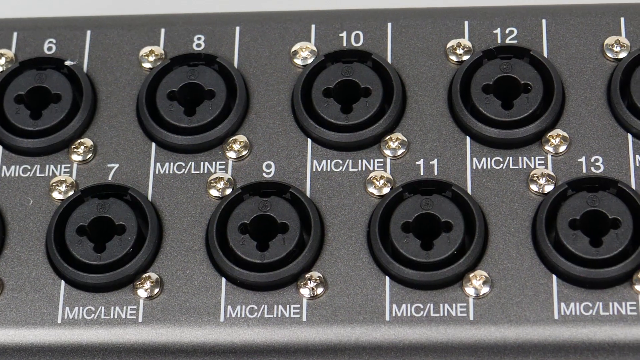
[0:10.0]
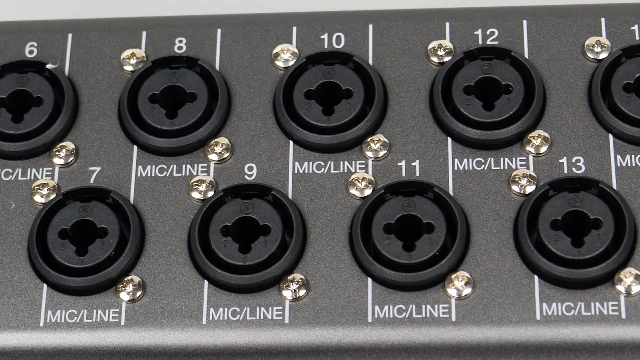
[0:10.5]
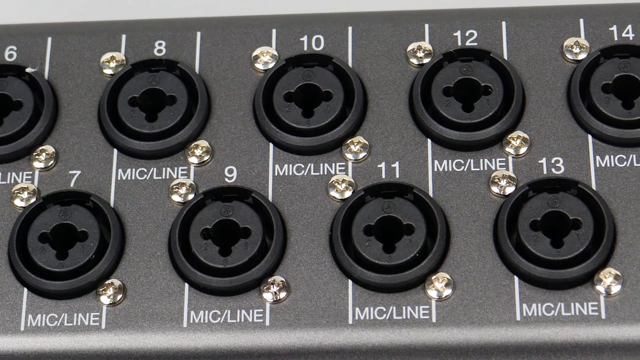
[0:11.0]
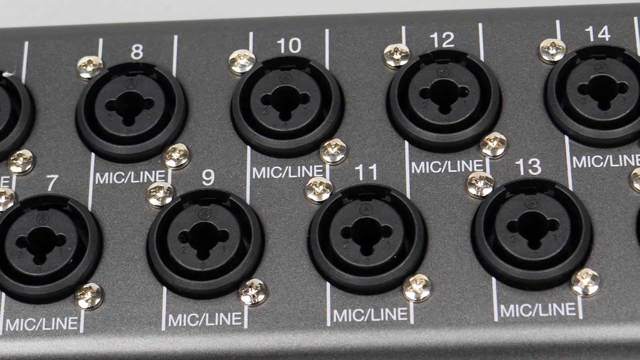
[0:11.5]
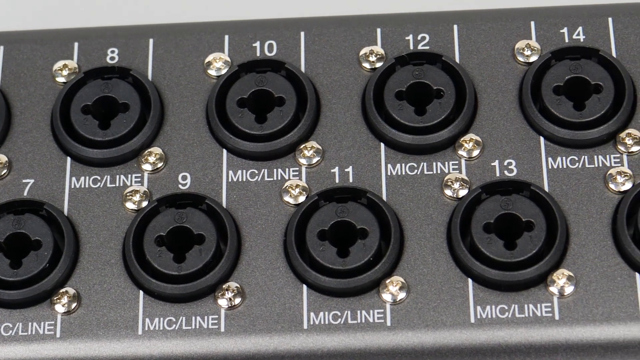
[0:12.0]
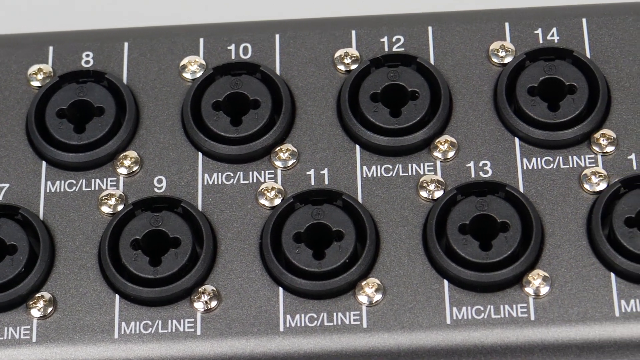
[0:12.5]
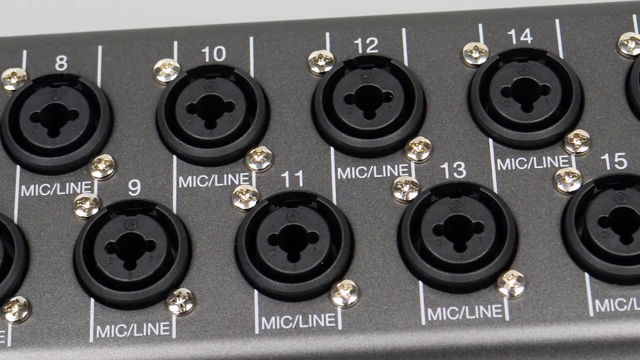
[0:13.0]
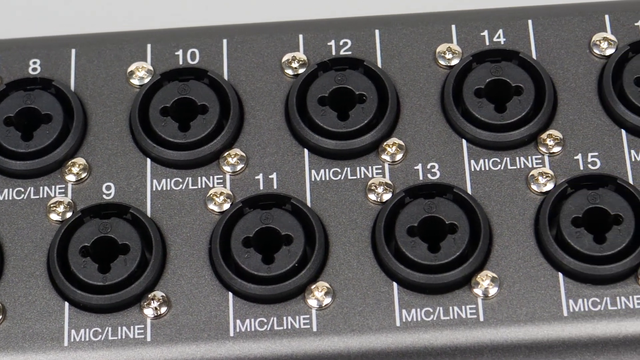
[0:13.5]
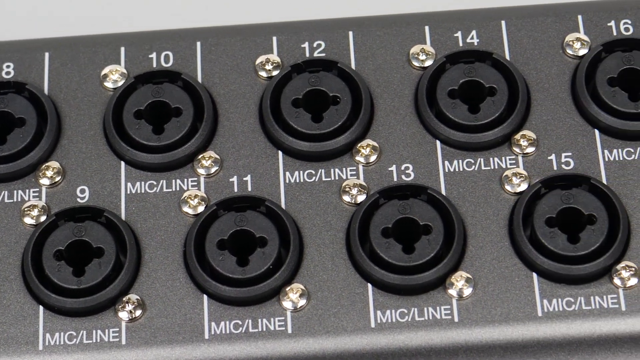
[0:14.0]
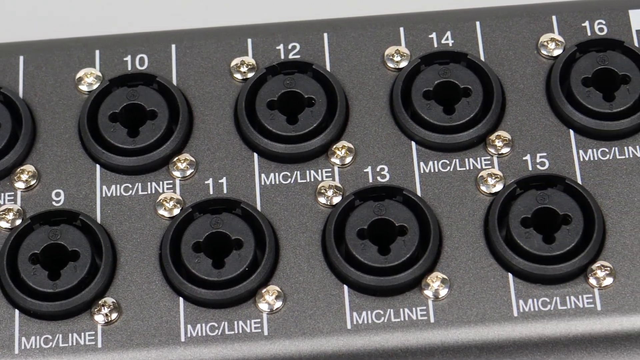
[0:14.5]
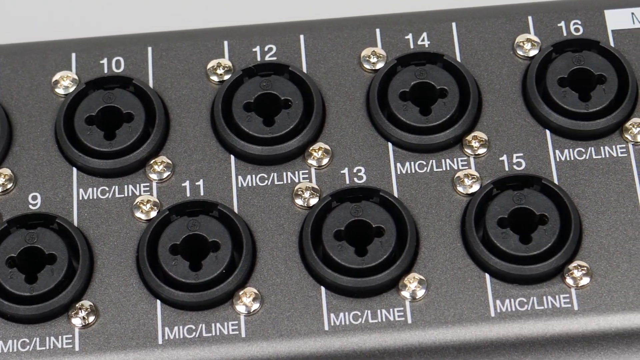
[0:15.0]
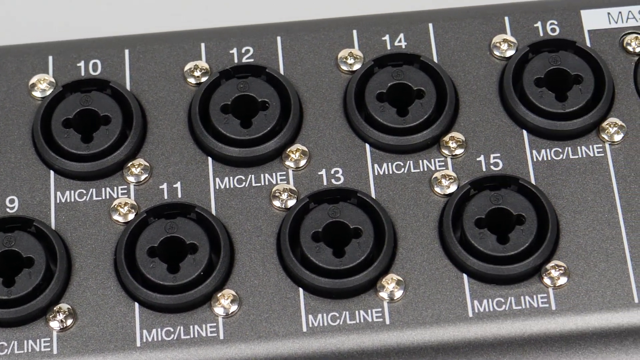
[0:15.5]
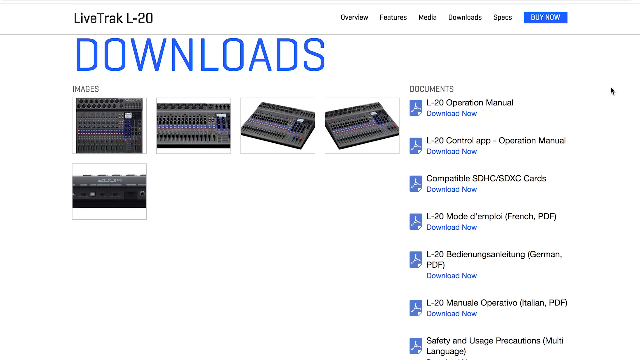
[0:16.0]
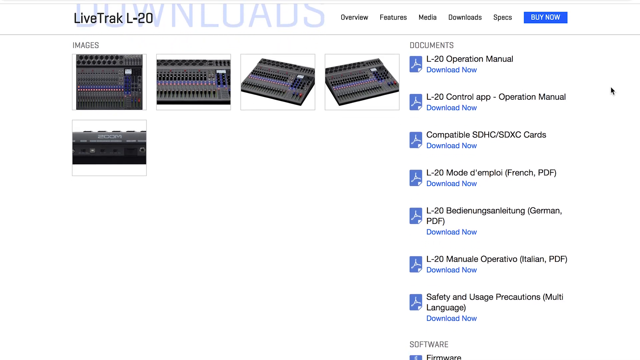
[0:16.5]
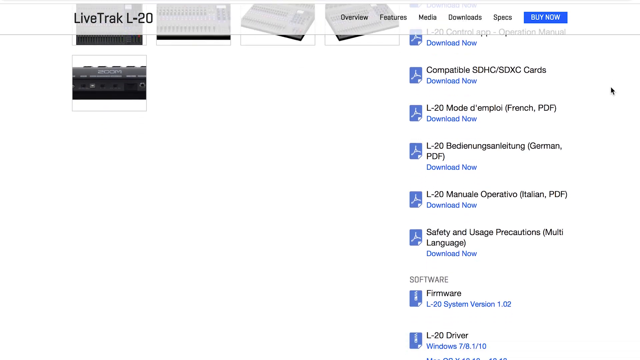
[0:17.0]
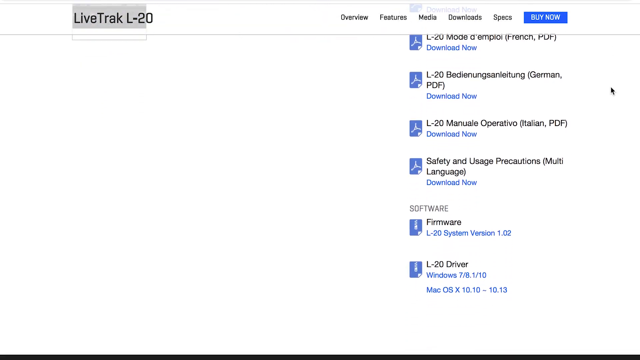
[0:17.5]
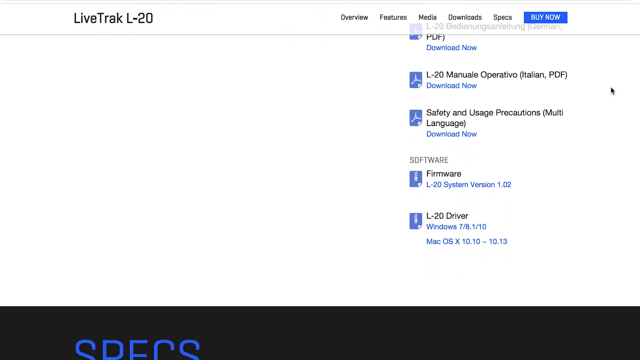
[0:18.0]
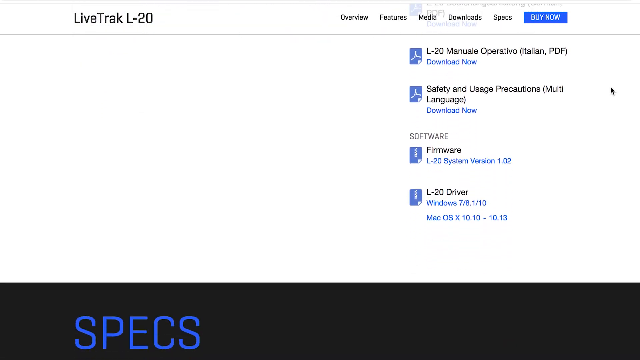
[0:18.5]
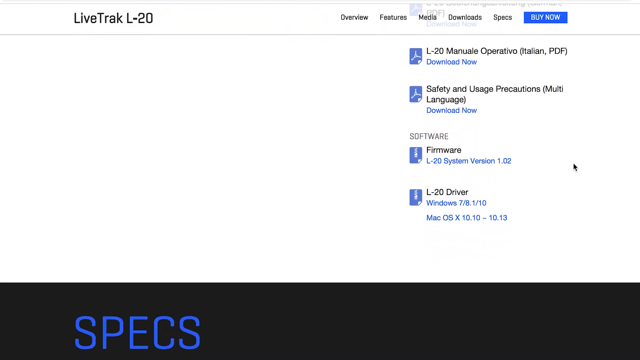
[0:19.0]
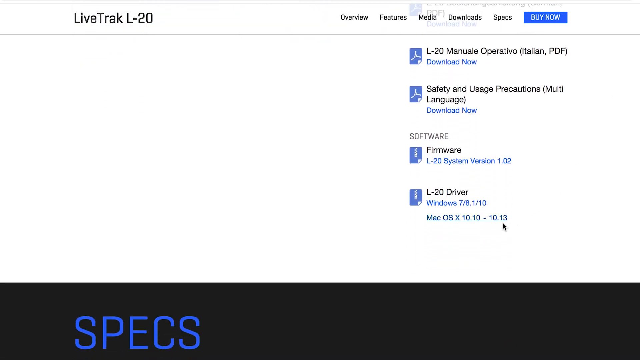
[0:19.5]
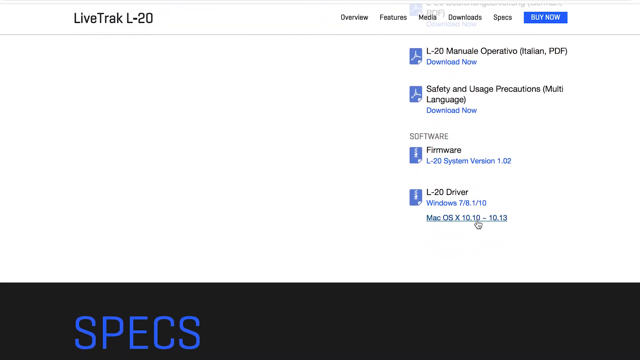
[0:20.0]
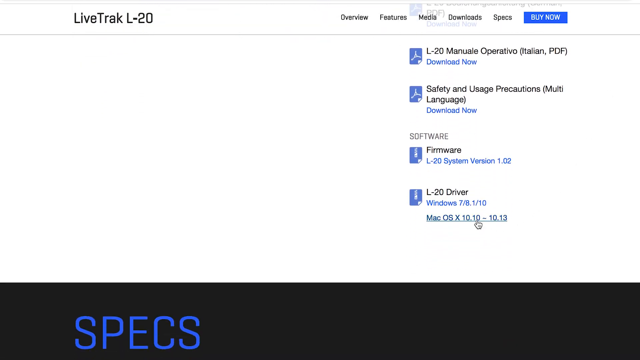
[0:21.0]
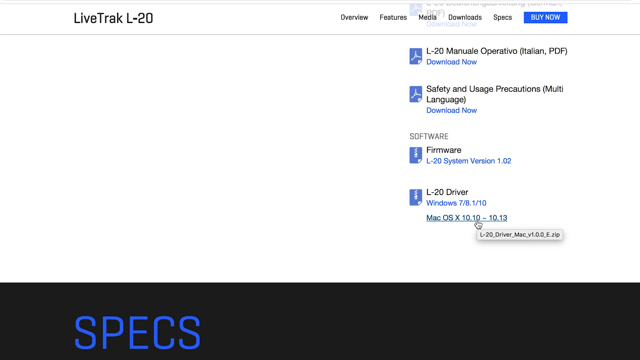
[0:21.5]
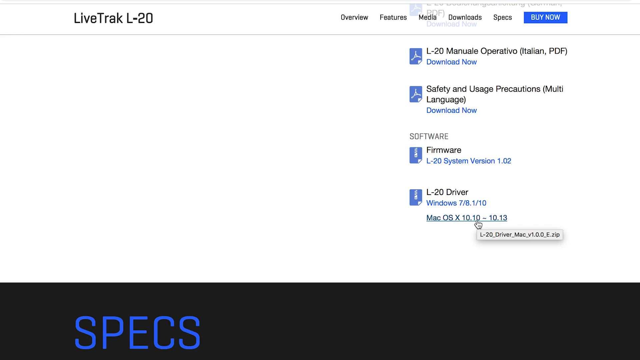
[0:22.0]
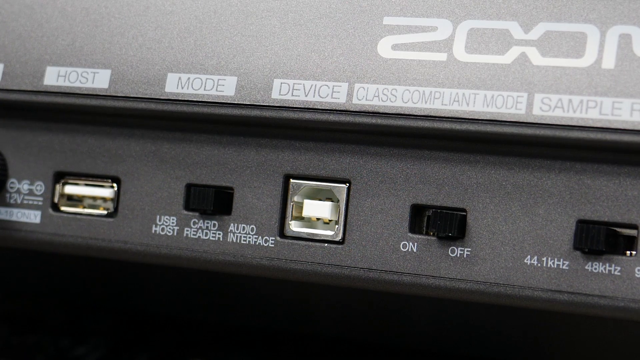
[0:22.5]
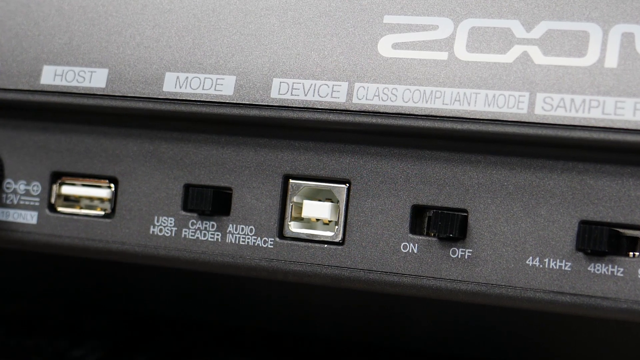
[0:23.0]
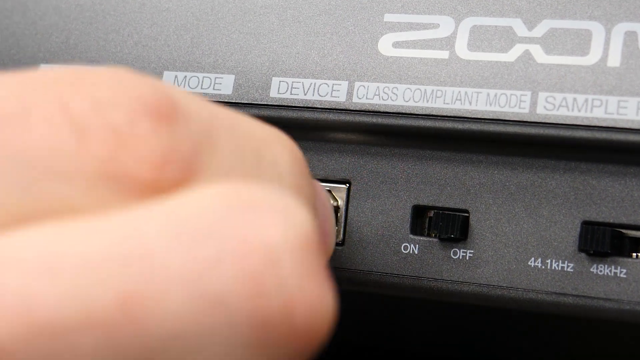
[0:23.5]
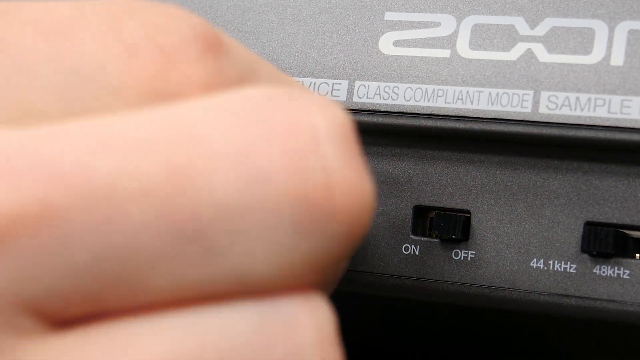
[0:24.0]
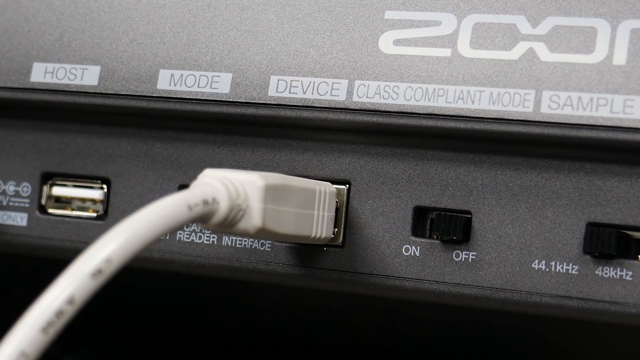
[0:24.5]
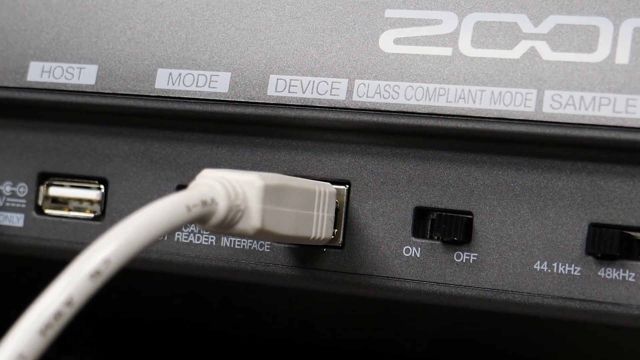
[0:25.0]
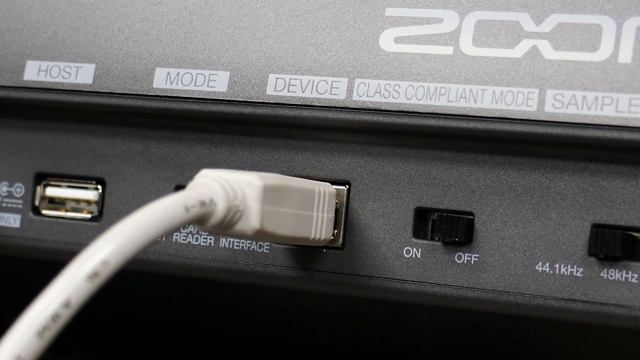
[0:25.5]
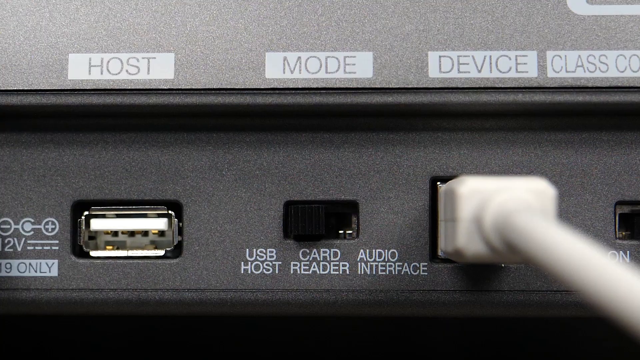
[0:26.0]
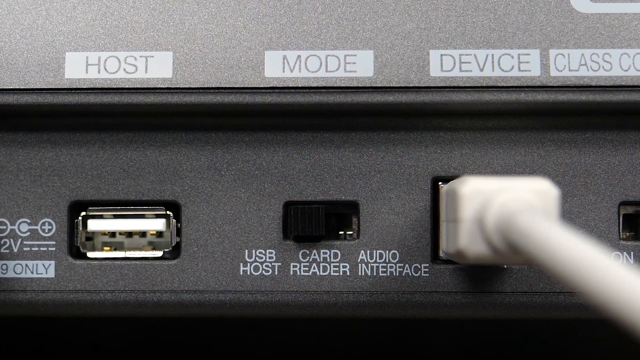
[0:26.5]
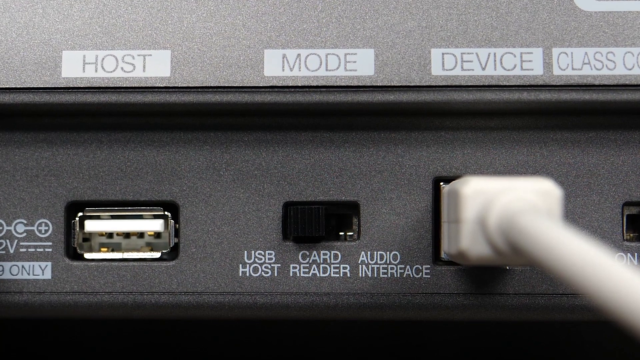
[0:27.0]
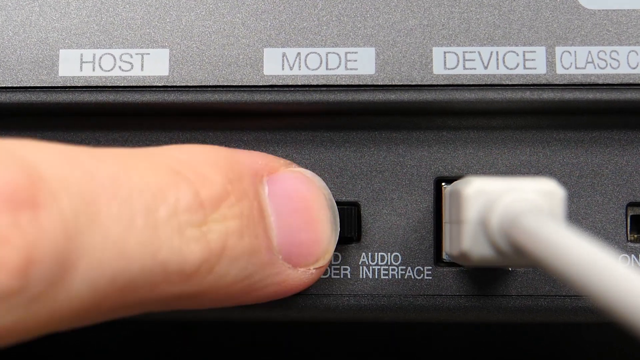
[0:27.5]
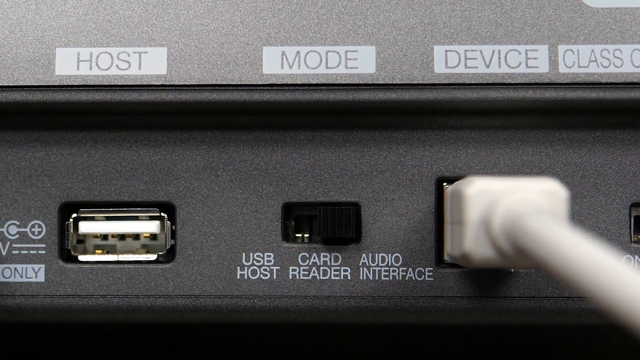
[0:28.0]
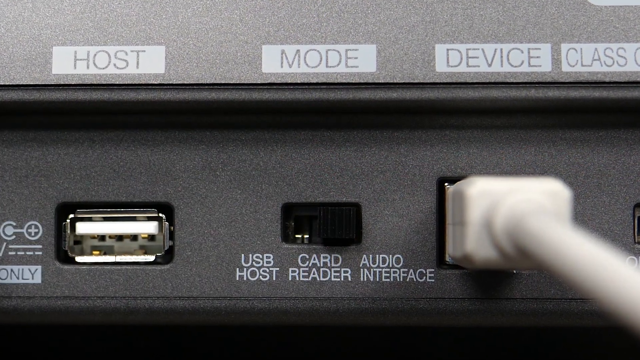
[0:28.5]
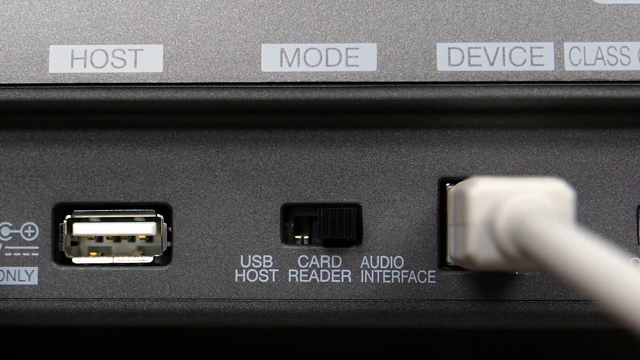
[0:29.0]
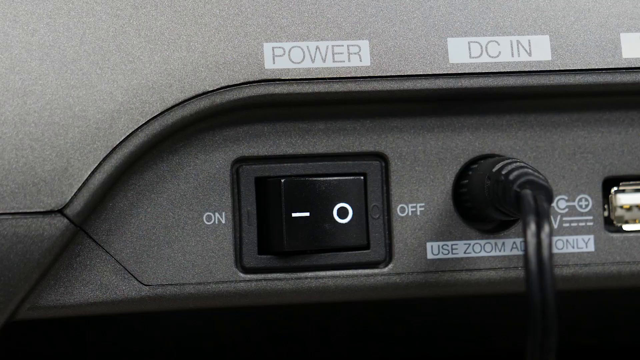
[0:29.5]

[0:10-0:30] The same machine appears with different things shown on it. The view scrolls down and something is clicked. A white cord is plugged into the machine; beside it are a USB switch and an on-off switch. The plug-in areas are shown, and the view moves down to an L20 driver, where the mouse clicks on something. The plugs shown are black with white lines around them. Mac OS x 1010 is clicked, and the white cord is plugged in, with "USB host" and an on-off button beside it.